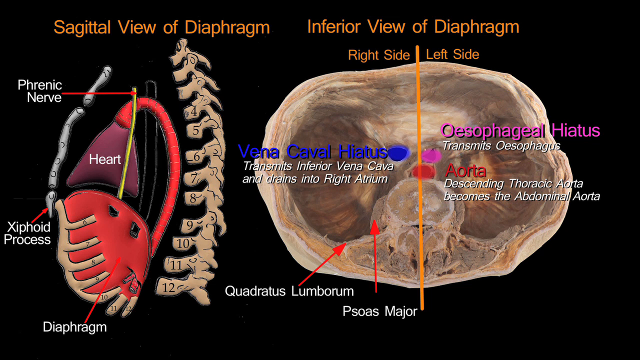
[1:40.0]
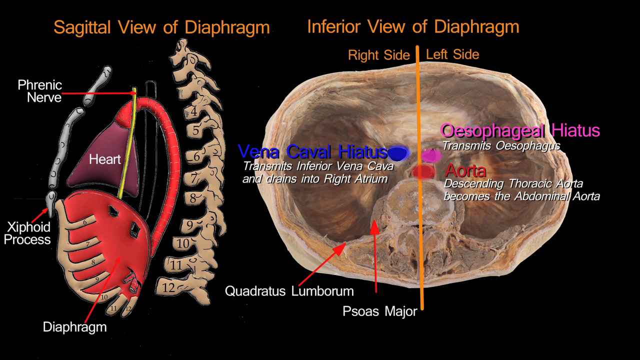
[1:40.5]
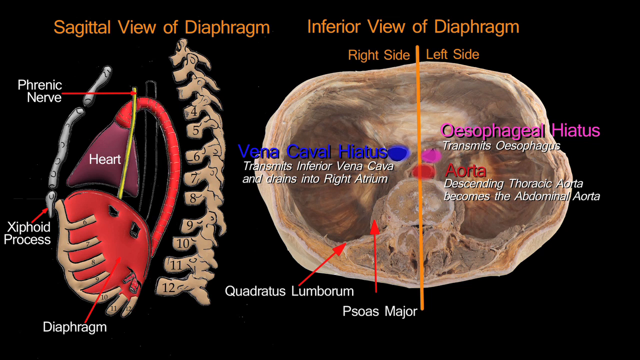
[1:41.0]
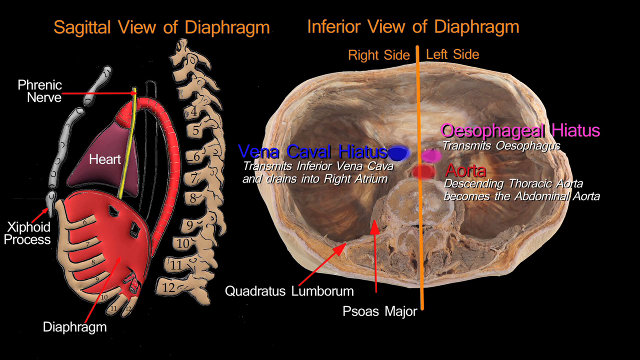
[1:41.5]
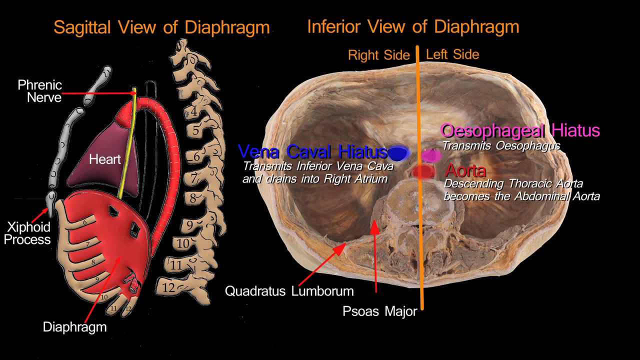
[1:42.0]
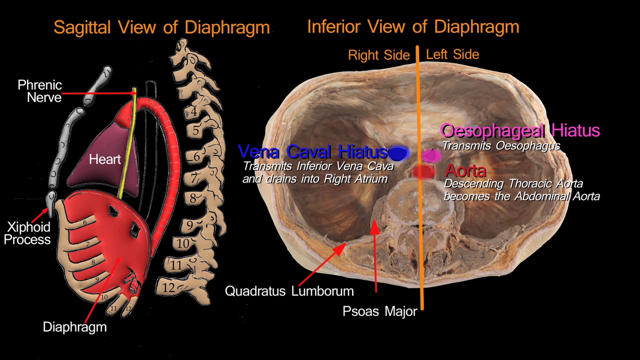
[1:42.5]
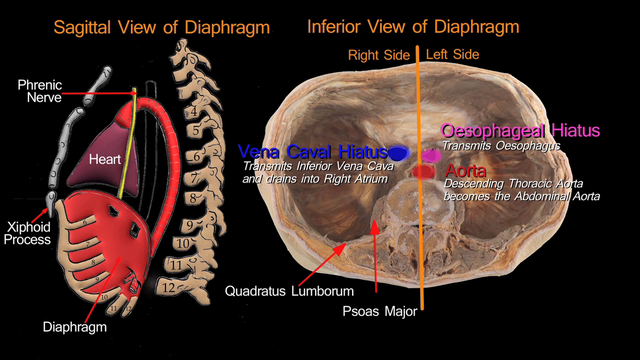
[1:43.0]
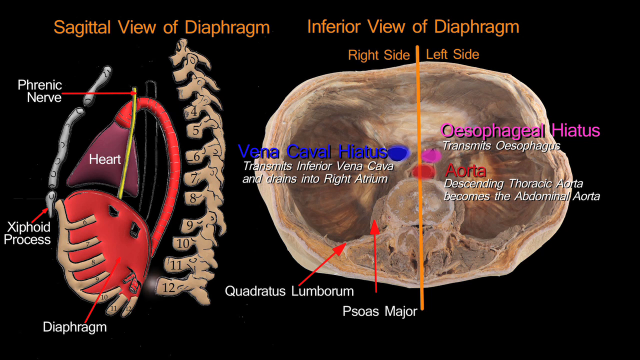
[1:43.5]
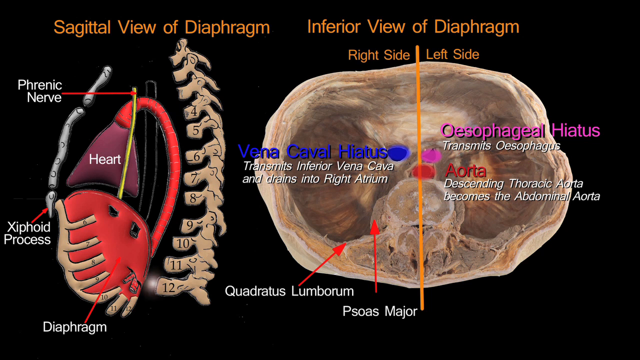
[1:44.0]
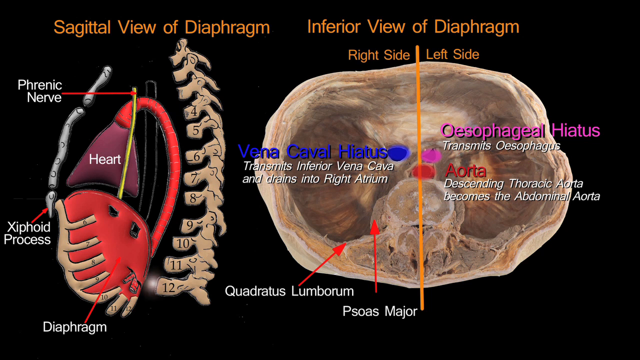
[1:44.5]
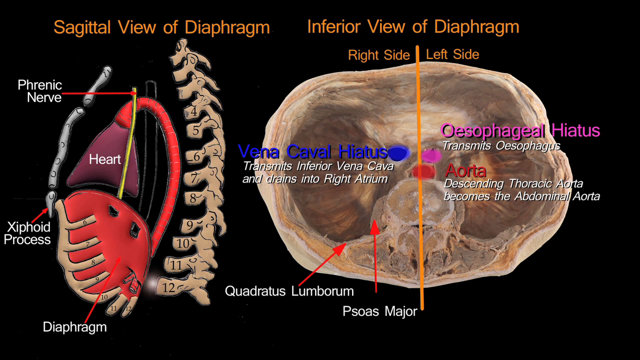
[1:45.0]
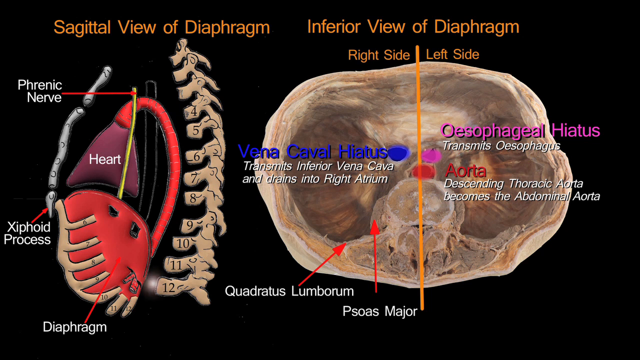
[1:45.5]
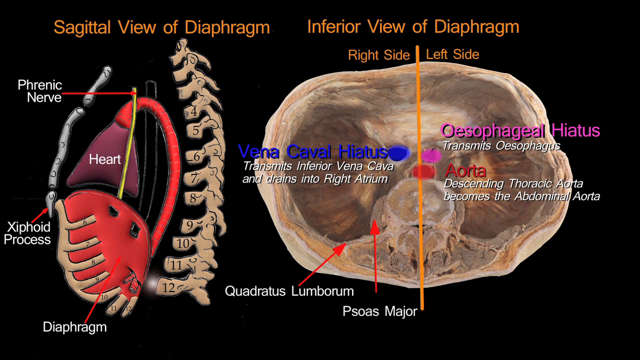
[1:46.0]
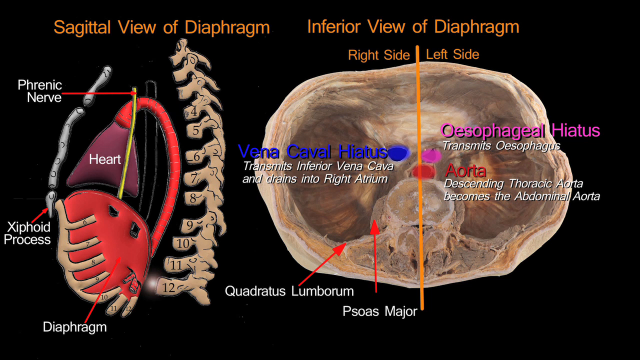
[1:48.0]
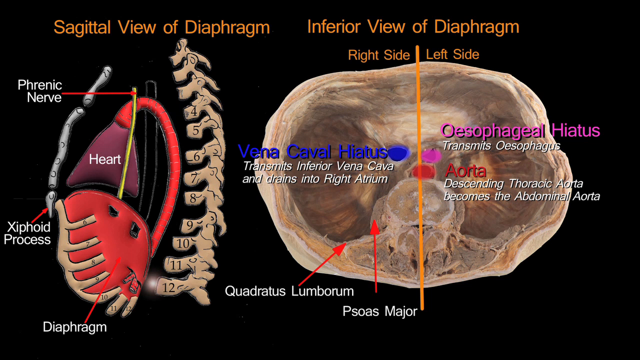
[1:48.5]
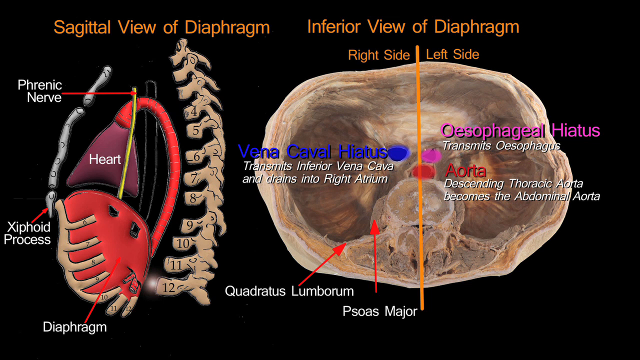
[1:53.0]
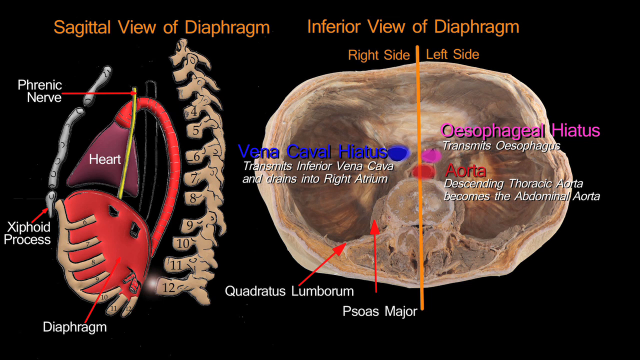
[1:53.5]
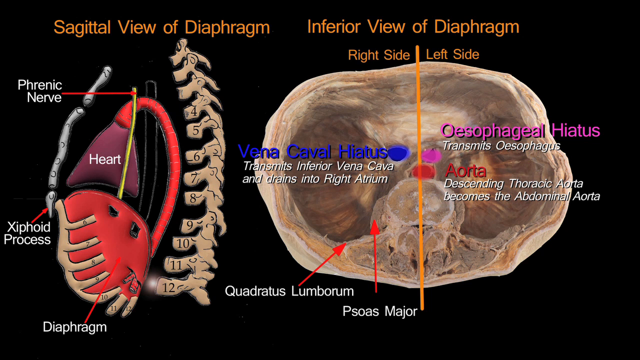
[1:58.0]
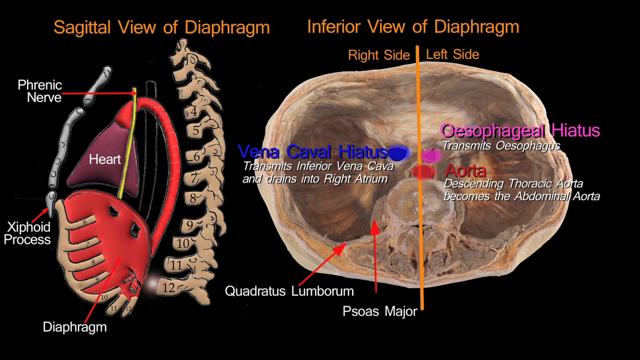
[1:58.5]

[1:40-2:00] The same two graphics are on the screen. On the left is the sagittal view of the diaphragm, labelled with the heart, the phrenic nerve and the xiphoid process, with numbered vertebrae on the side. On the right is the inferior view of the diaphragm, labelled with the vena caval hiatus, the esophageal hiatus, the aorta, the quadratus lumborum and the psoas major, in orange, pink, blue, red and white, all on a black background. The professor does not come back on screen; only the two labelled graphics are shown side by side. Orange headings above them read "sagittal view of diaphragm" and "inferior view of diaphragm".